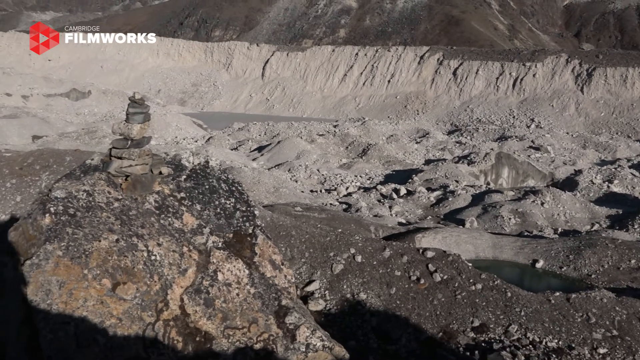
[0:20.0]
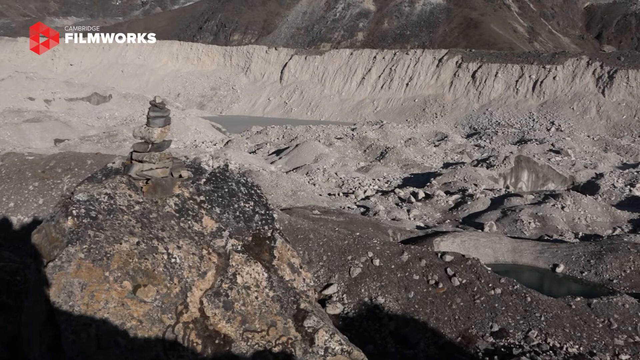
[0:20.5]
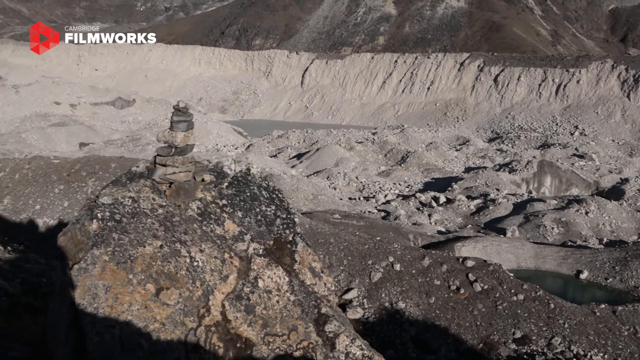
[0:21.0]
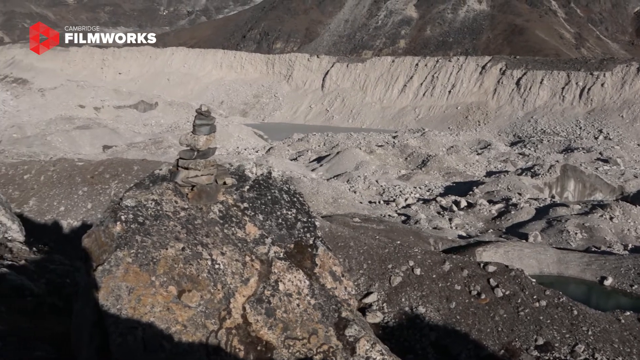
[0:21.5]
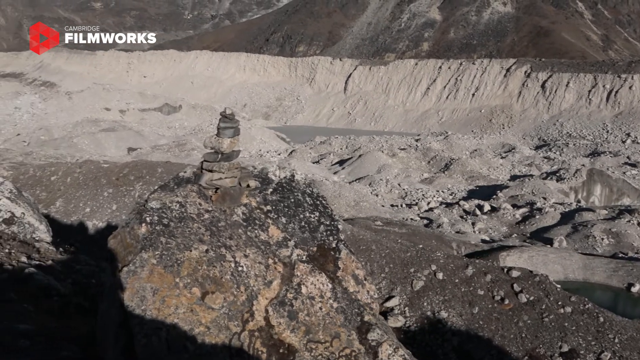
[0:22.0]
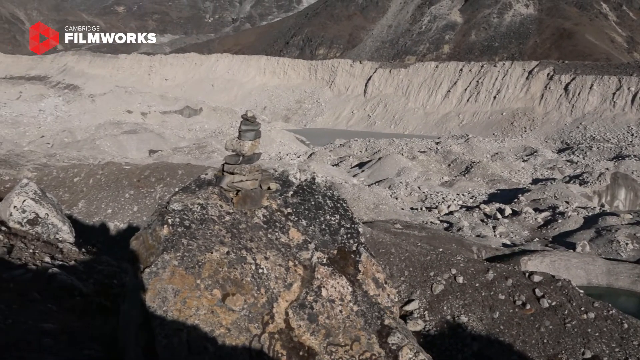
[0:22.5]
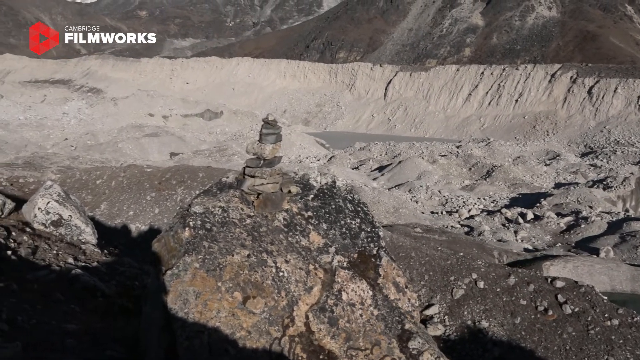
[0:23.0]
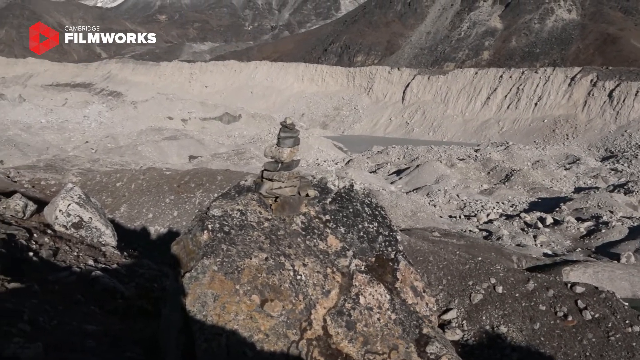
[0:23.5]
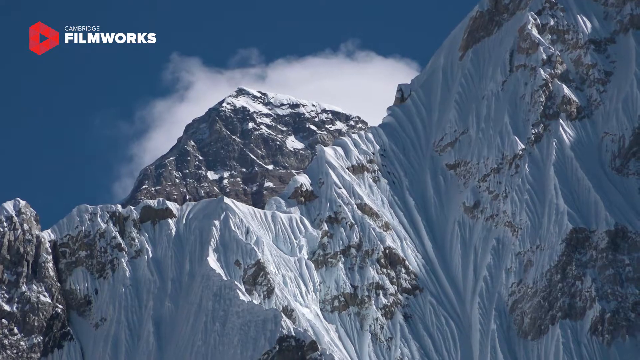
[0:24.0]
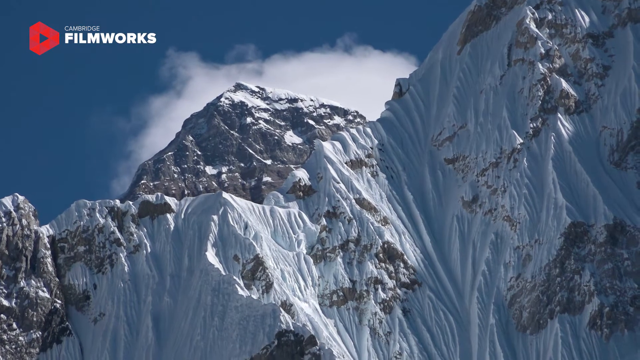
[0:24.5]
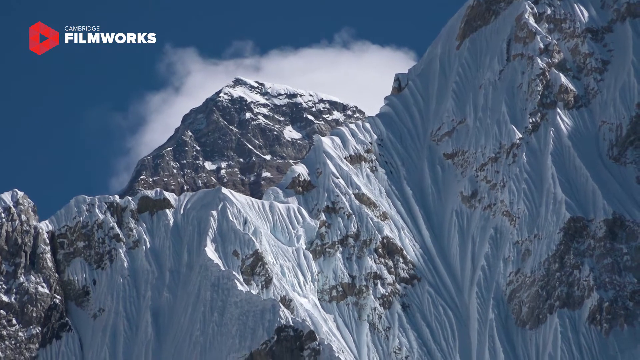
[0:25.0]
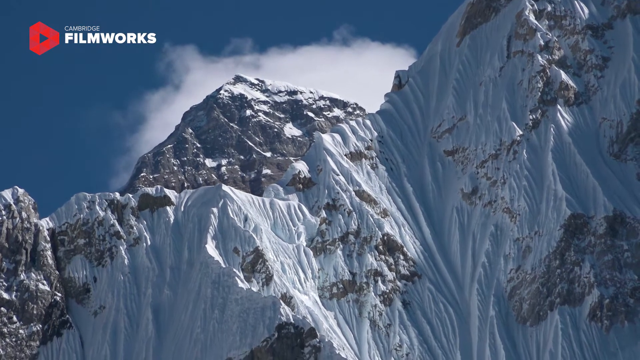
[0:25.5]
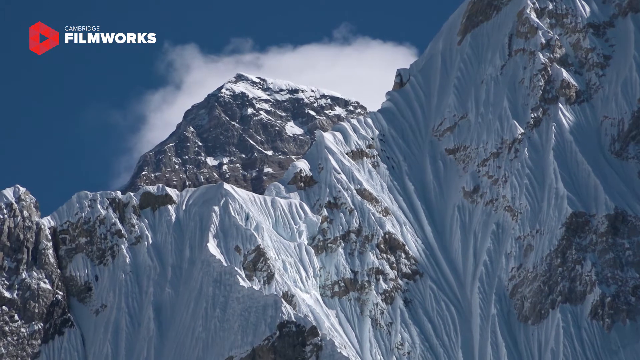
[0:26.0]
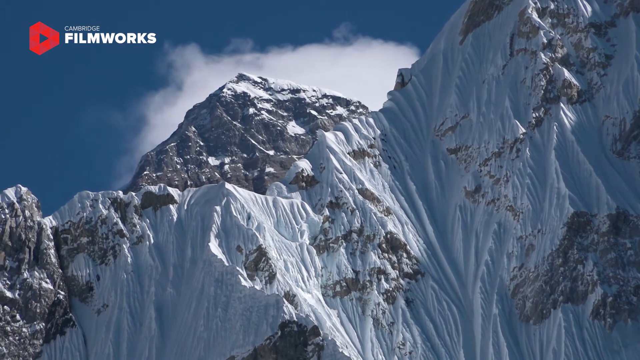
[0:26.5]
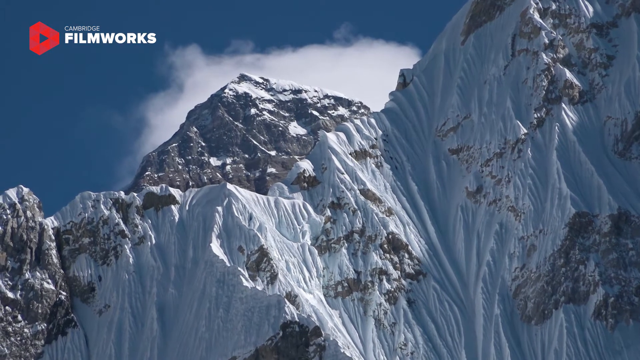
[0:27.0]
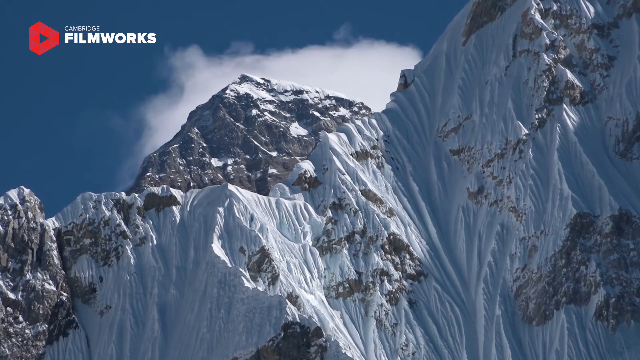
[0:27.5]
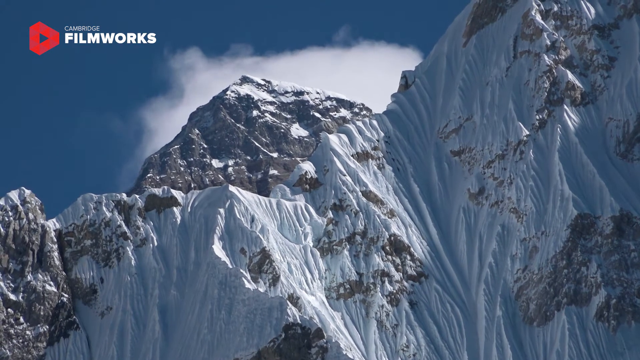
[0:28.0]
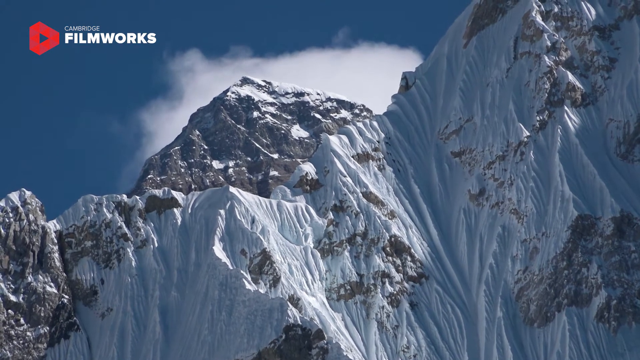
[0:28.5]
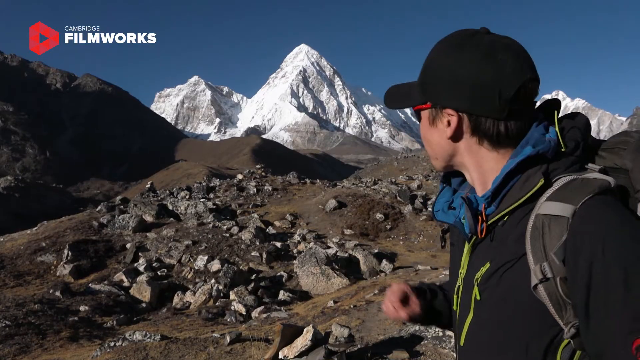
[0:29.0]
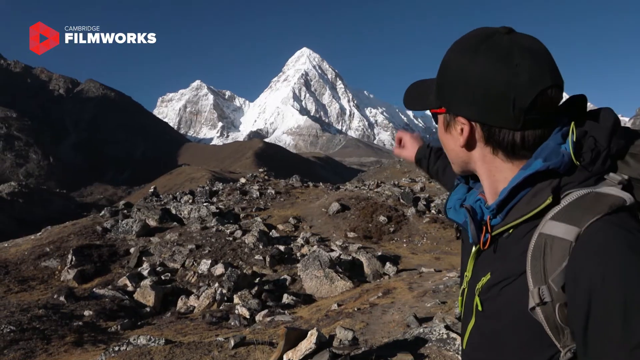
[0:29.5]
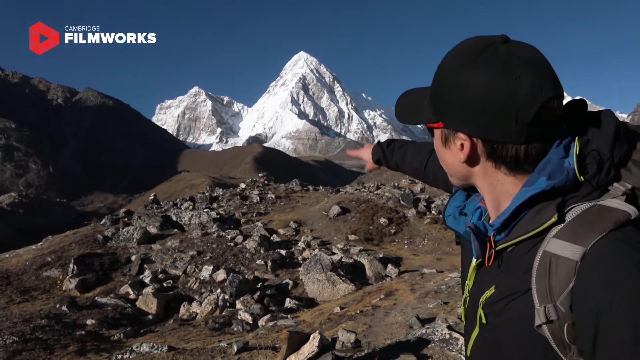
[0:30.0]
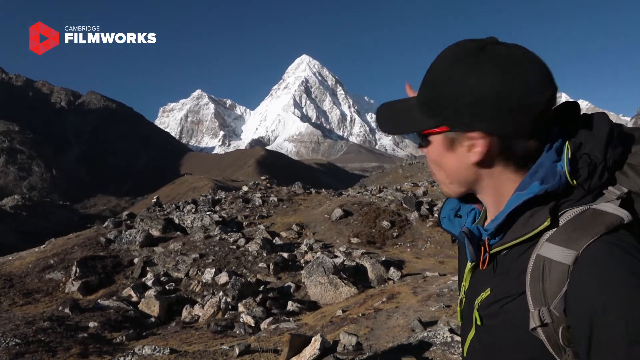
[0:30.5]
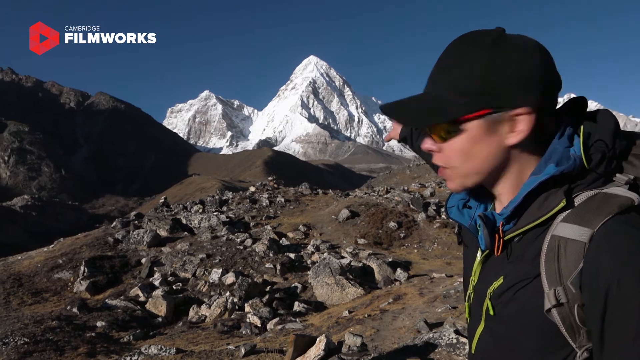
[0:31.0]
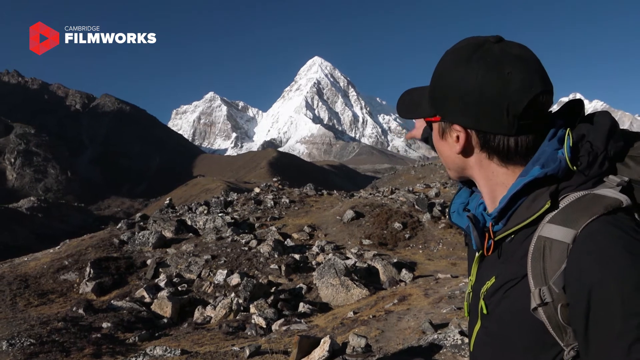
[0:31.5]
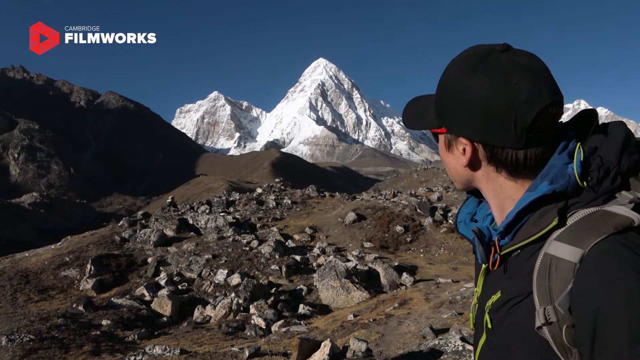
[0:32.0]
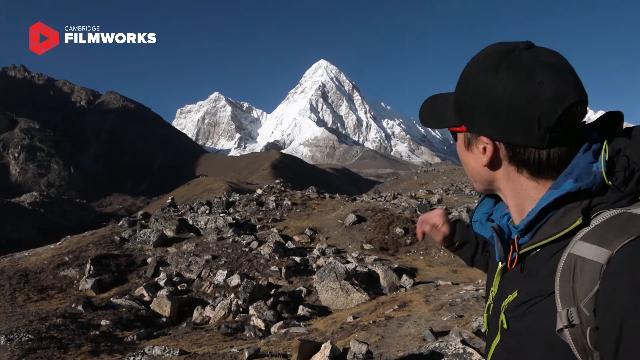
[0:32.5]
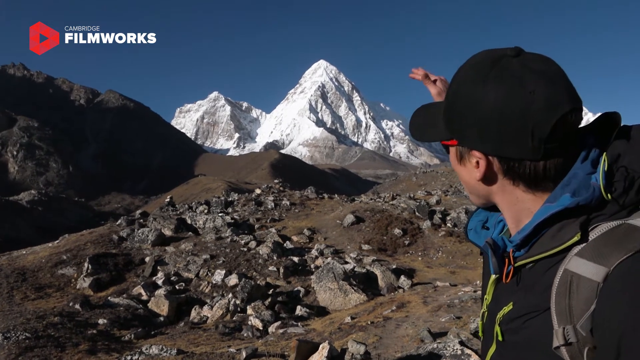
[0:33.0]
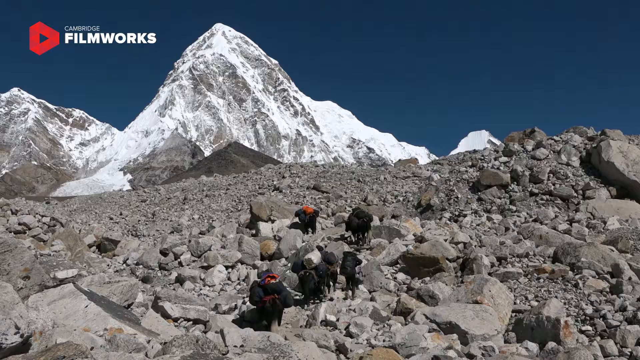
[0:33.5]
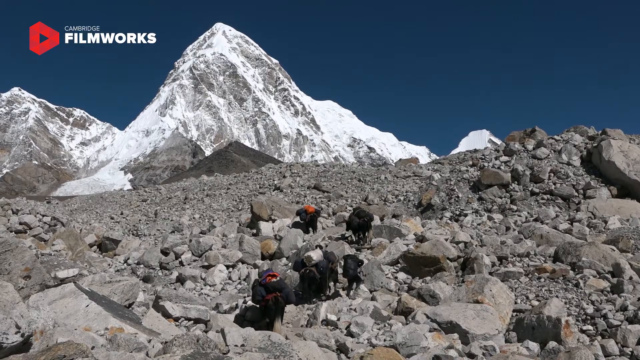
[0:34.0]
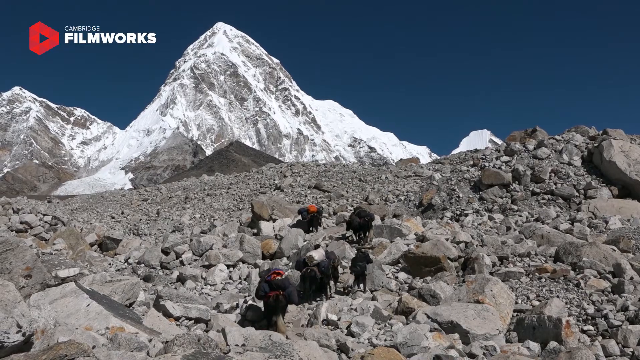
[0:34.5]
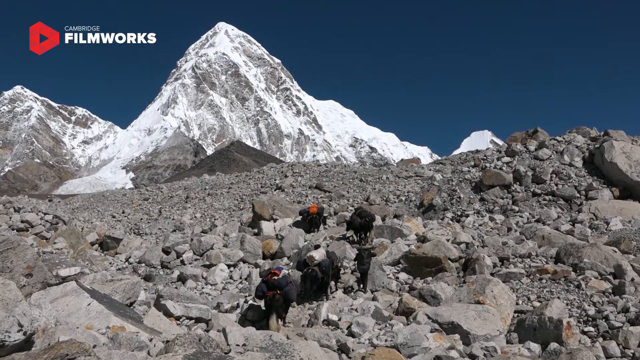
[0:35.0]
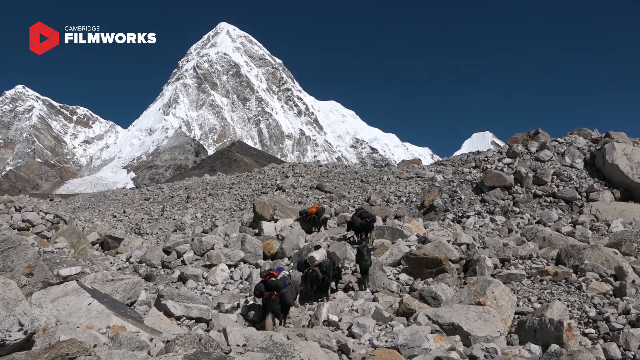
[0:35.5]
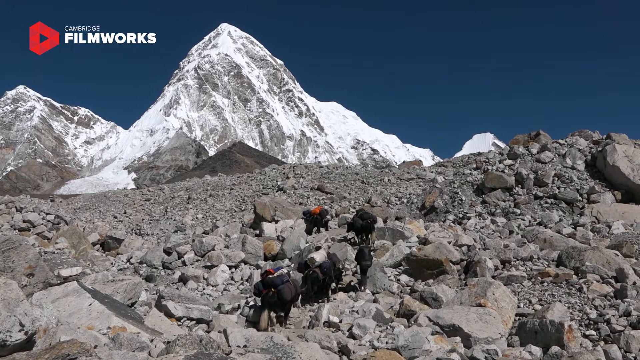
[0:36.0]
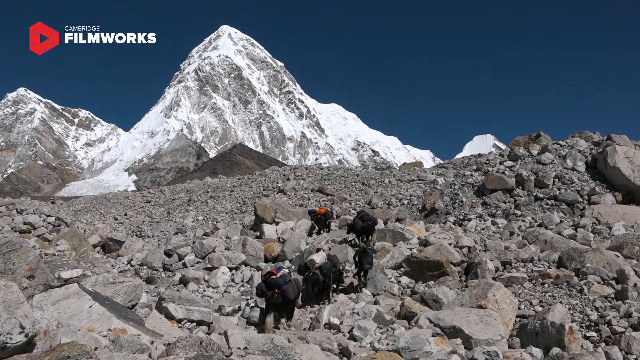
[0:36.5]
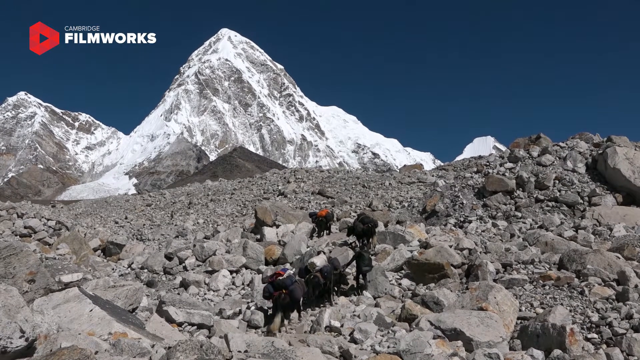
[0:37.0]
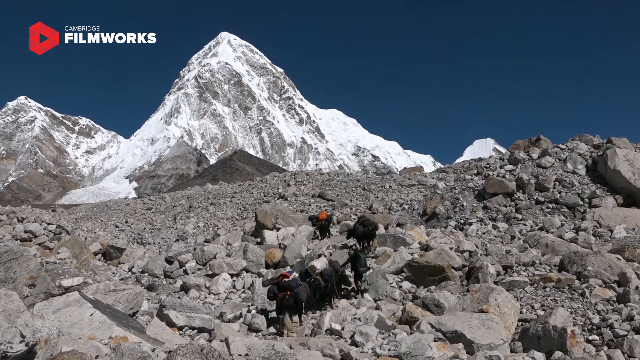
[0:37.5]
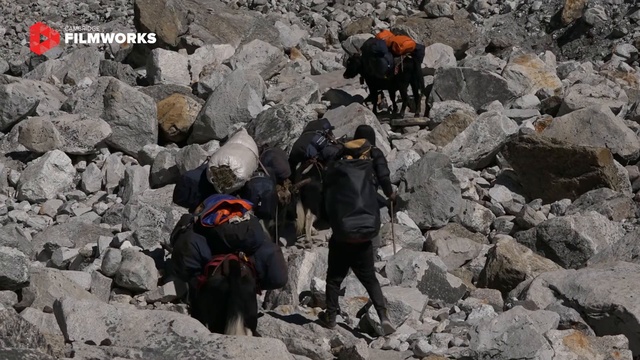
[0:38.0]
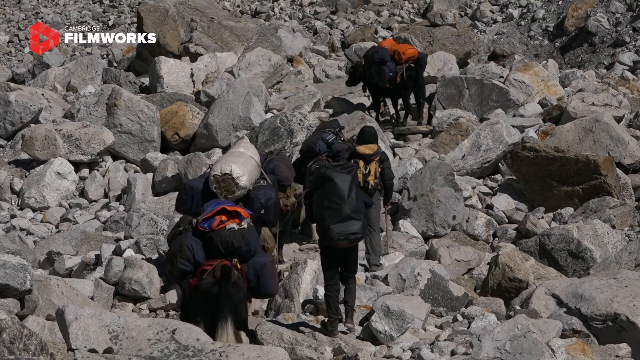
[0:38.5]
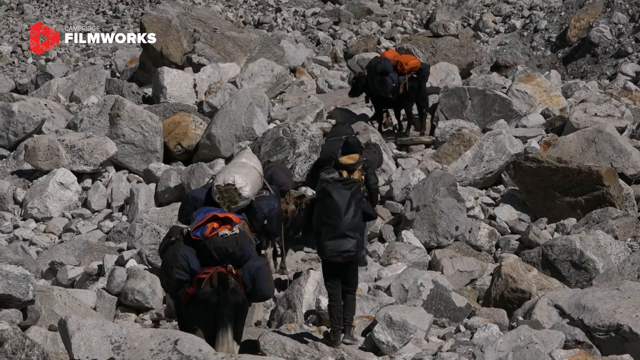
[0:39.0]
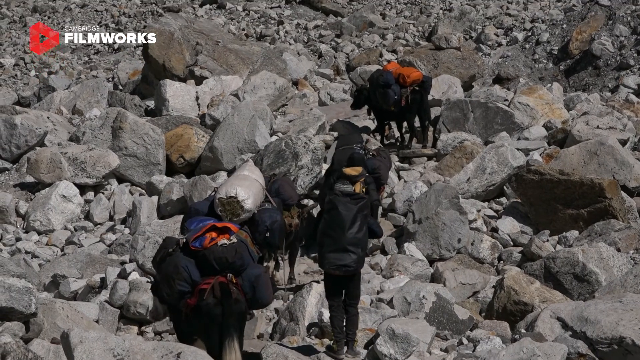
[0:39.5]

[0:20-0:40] The camera zooms in on a cairn, a human-made stack of stones, in a part of the glacier valley. The video cuts to the glacier itself, which is covered in ice, and the same hiker points at one of the peaks about two to three times. It then cuts to the glacier valley, where there are many loose rocks of different sizes. What appear to be about four or five hikers with backpacks and other luggage around them seem to be at a base camp, navigating the rocky terrain. There also appears to be an animal with bags attached to its back.